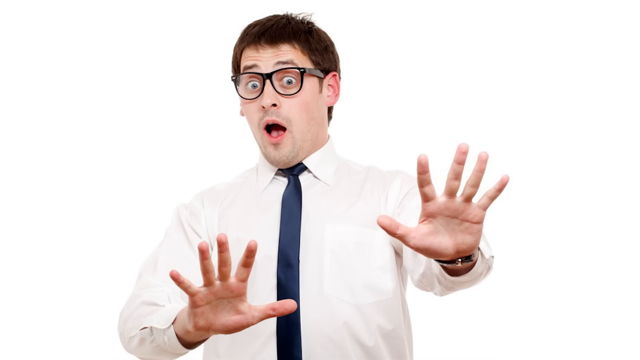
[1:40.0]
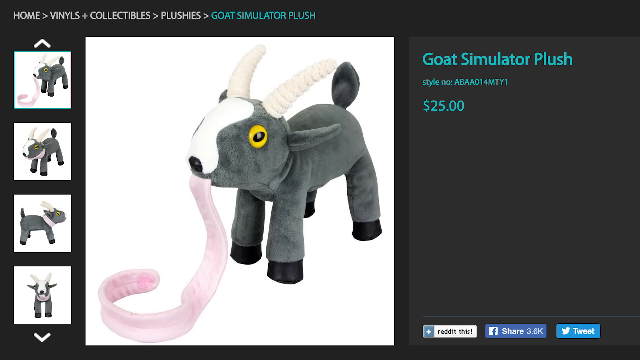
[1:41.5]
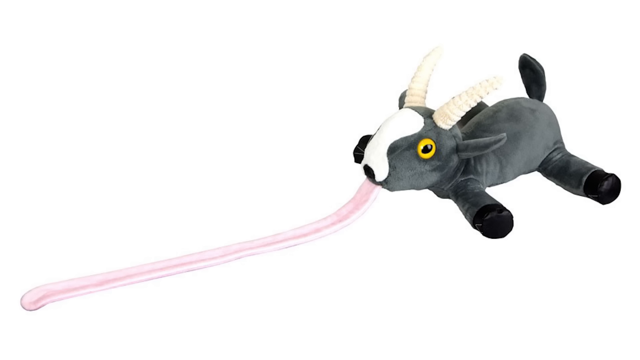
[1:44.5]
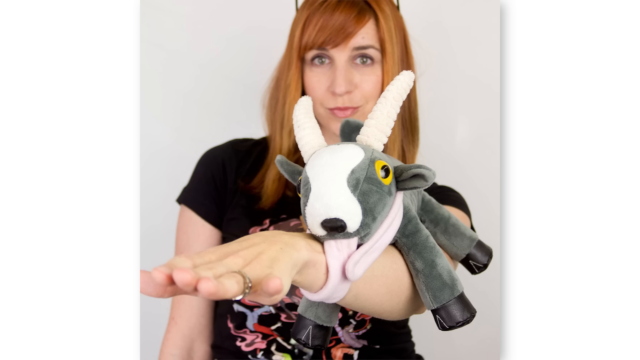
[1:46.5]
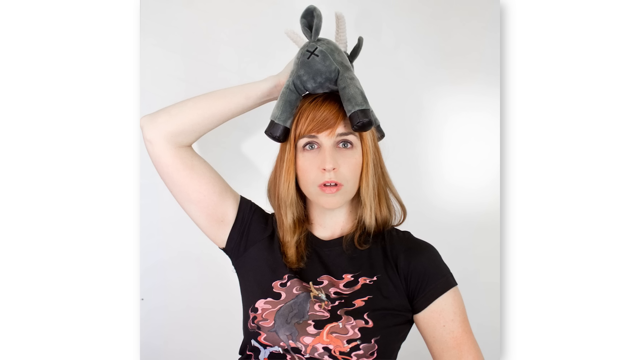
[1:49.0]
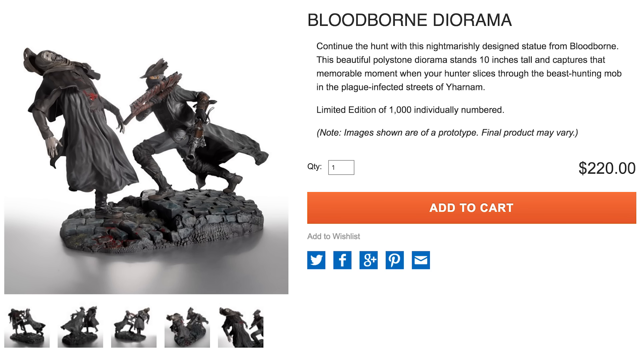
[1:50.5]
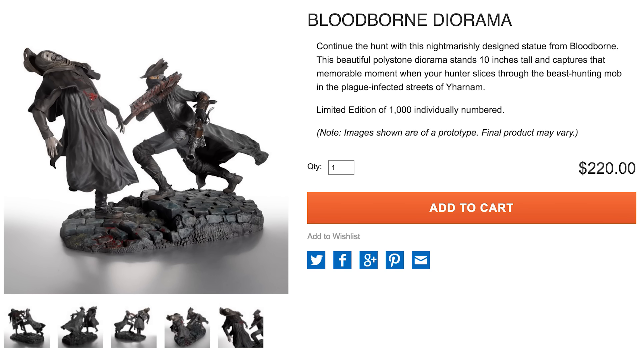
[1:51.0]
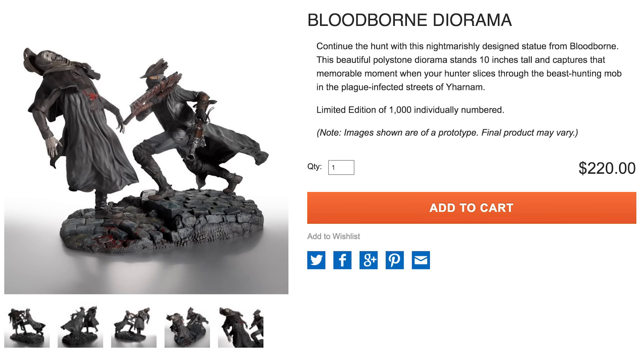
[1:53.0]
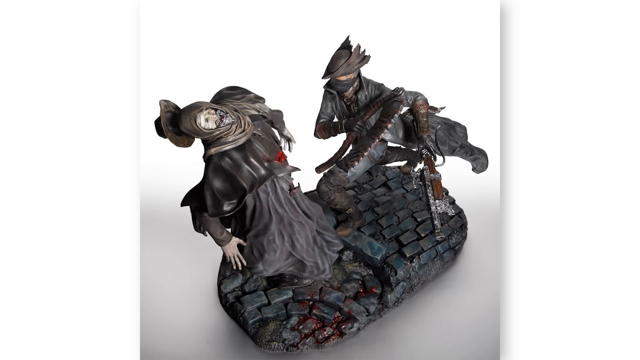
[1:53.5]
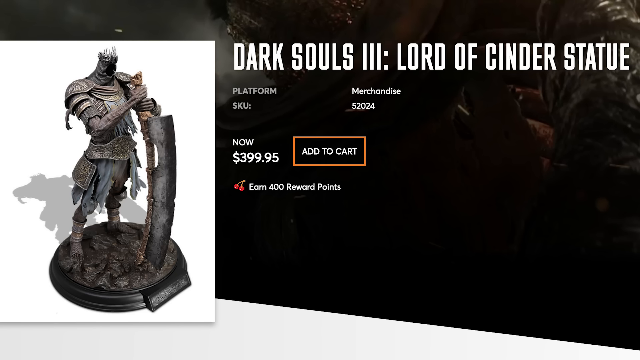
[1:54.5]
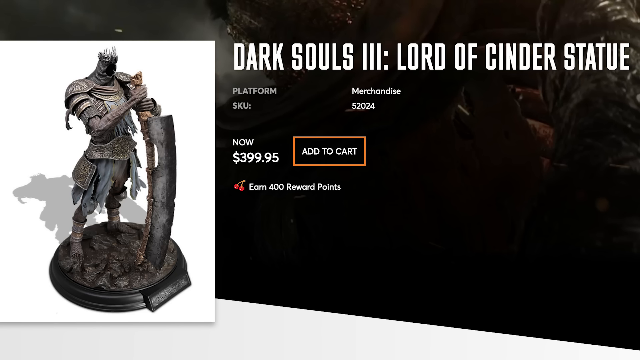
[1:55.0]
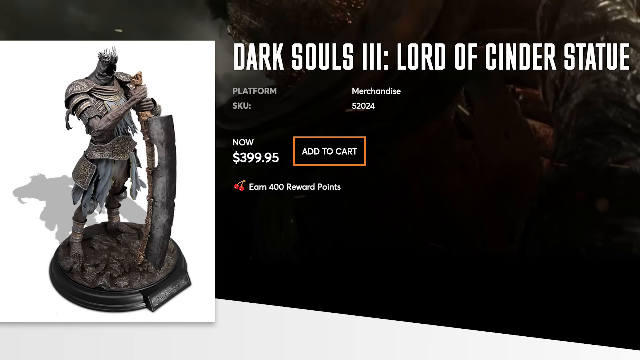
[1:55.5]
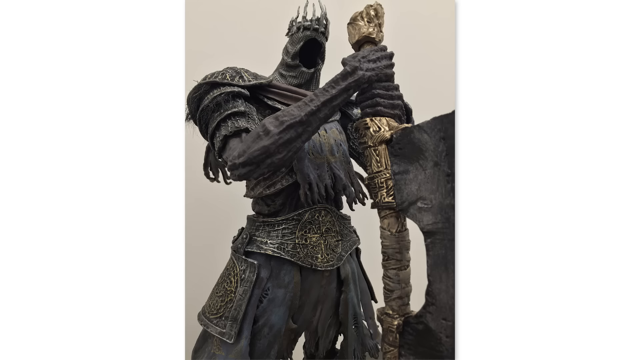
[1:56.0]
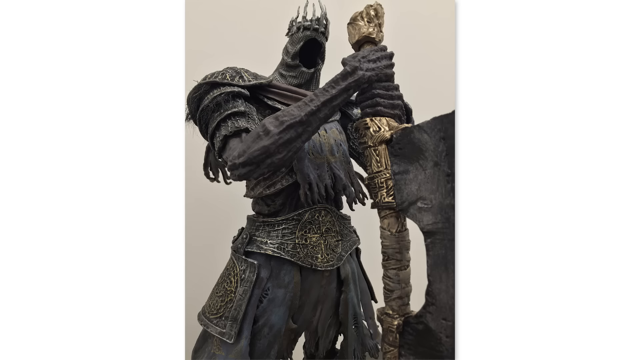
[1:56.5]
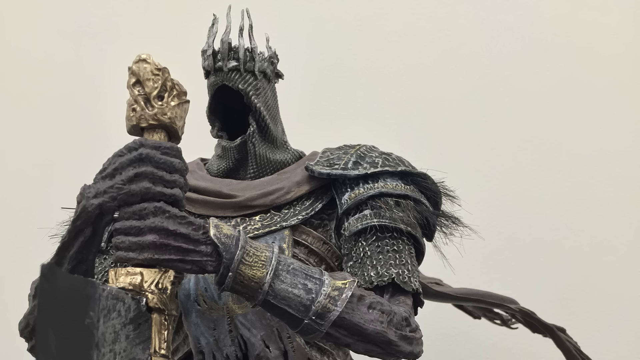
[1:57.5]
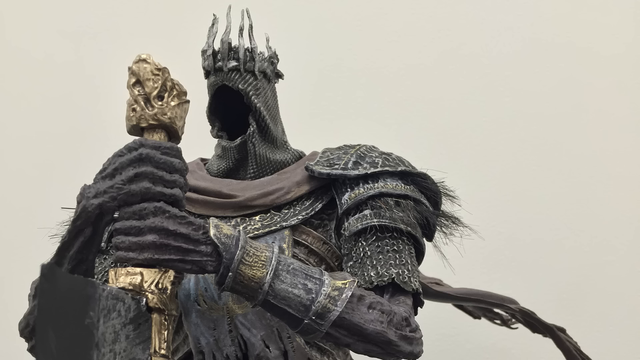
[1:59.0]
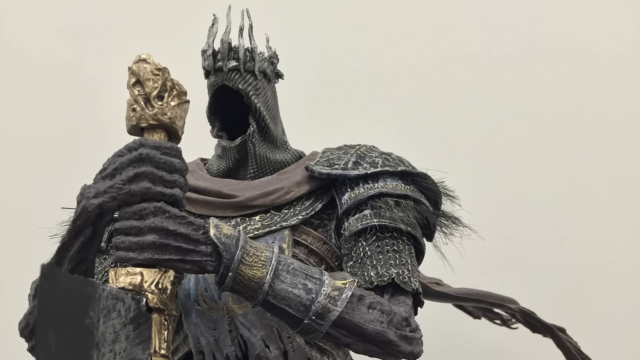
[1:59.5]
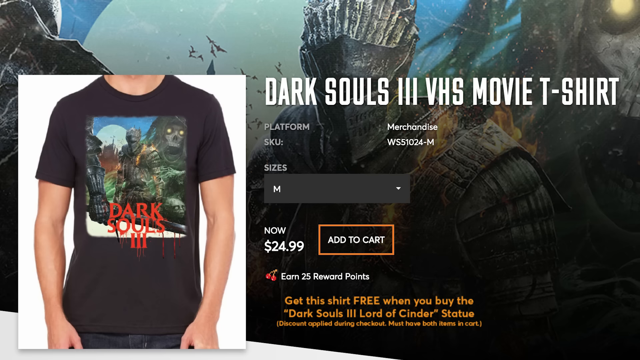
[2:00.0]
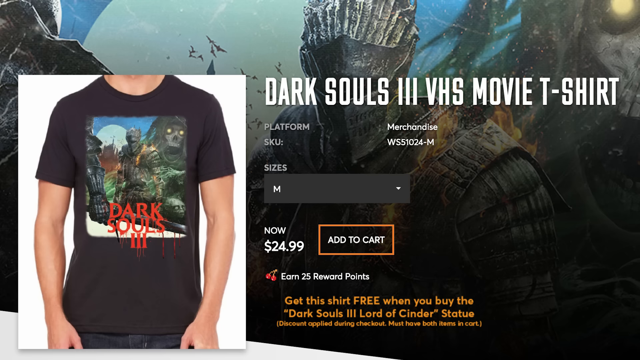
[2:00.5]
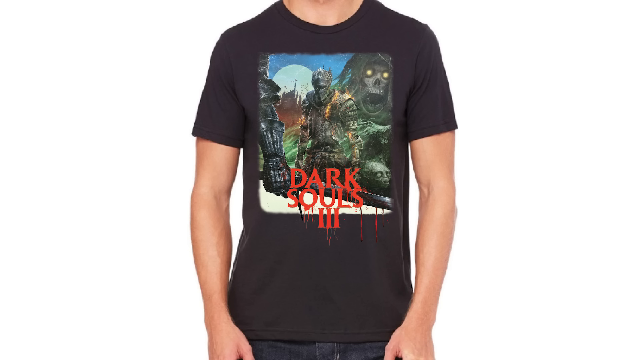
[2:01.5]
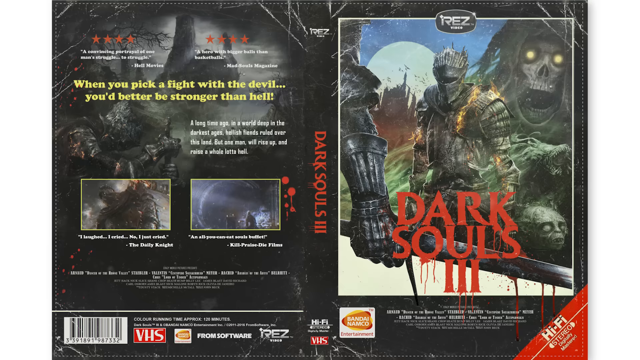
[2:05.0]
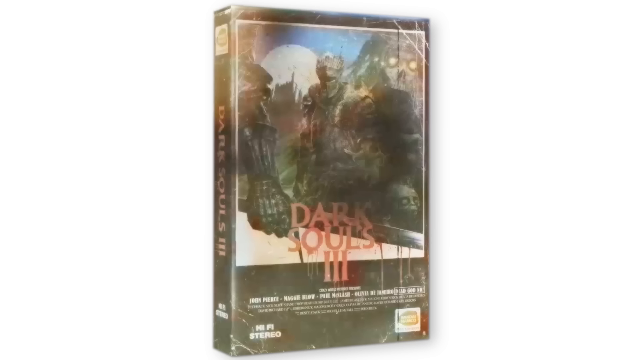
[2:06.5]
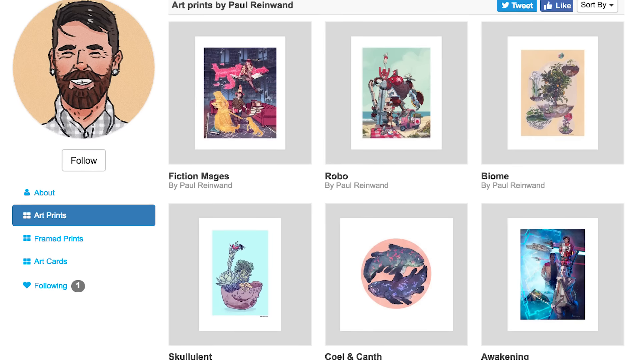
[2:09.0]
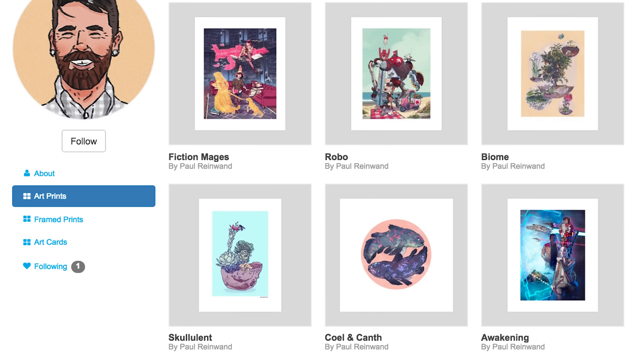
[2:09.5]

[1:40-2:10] A Goat Simulator plush, a goat figure with a really long tongue, costs $25 and is shown in different images and from different angles, with its tongue extending very long. One image shows a woman with long hair and blue eyes with the plush wrapped around her arm and the goat's tongue wrapped around her wrist; another shows her wearing the goat on top. An ad follows for a Bloodborne diorama in which one hooded character, in gray, stabs another. Next is an ad for a Dark Souls III Lord of Cinder statue, a figurine of a faceless character covered in some kind of armor, holding a very large knife and wearing a crown, apparently with some fur and big hands. It costs $399.95 and earns rewards points. A Dark Souls video game T-shirt follows.